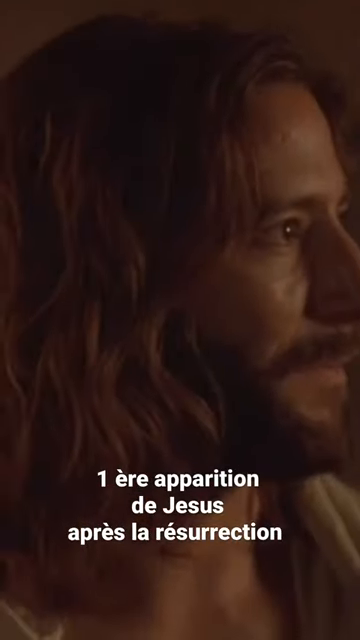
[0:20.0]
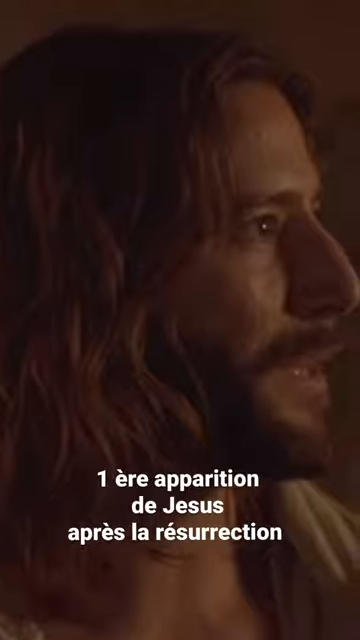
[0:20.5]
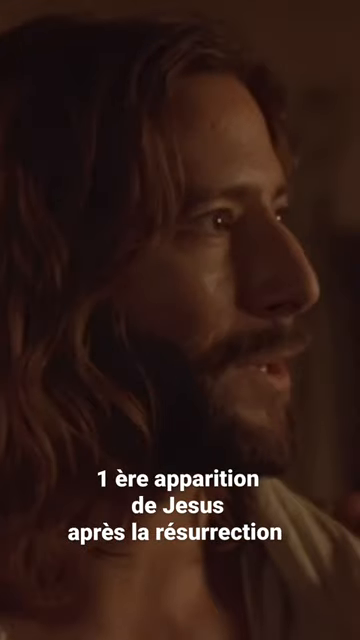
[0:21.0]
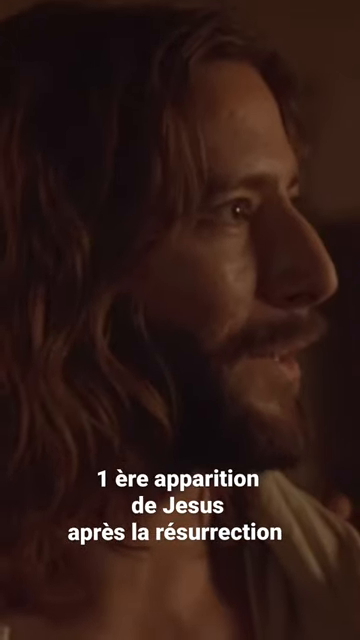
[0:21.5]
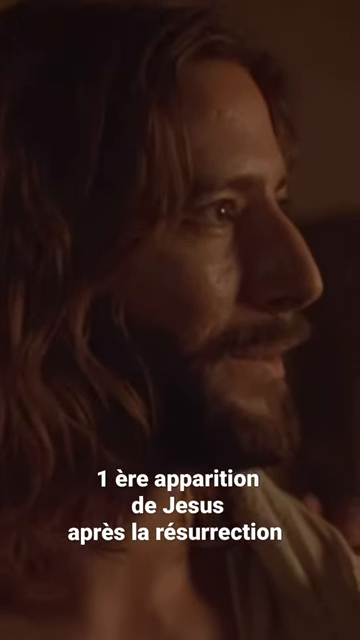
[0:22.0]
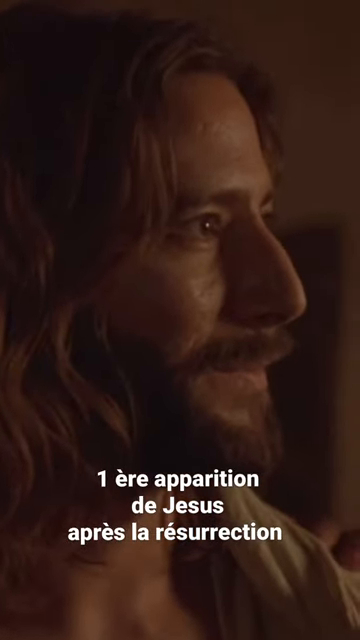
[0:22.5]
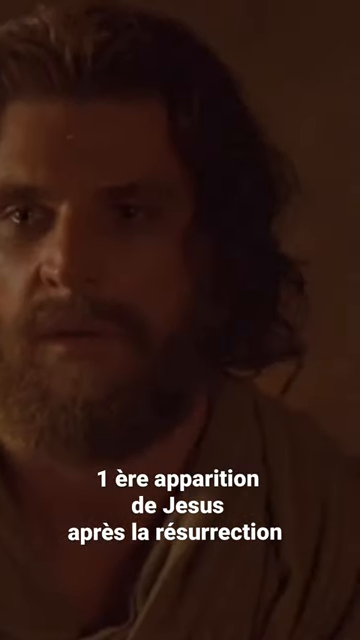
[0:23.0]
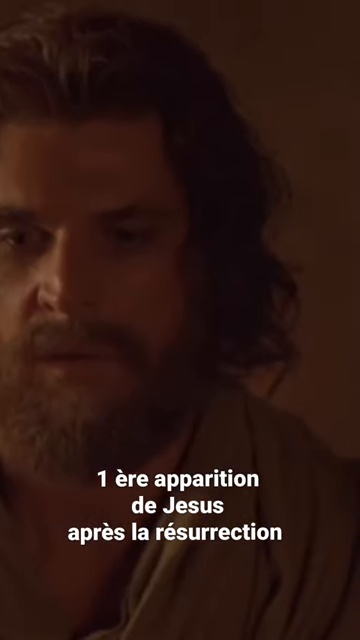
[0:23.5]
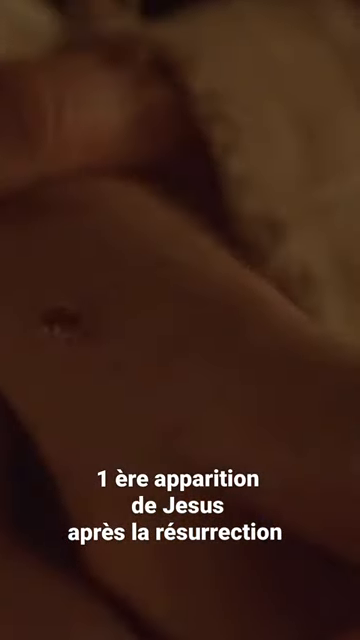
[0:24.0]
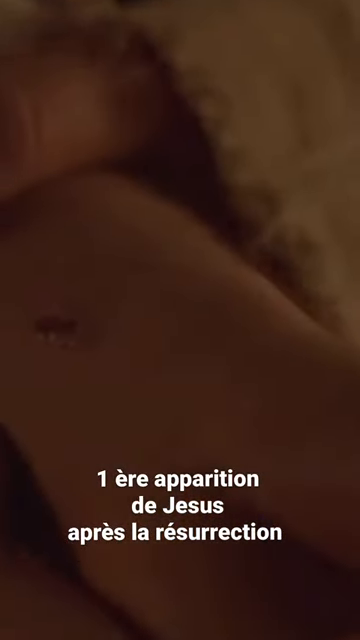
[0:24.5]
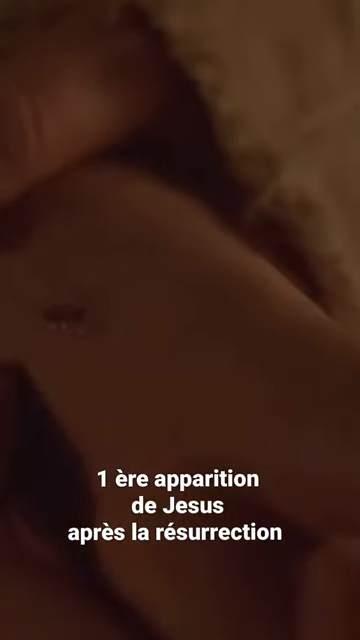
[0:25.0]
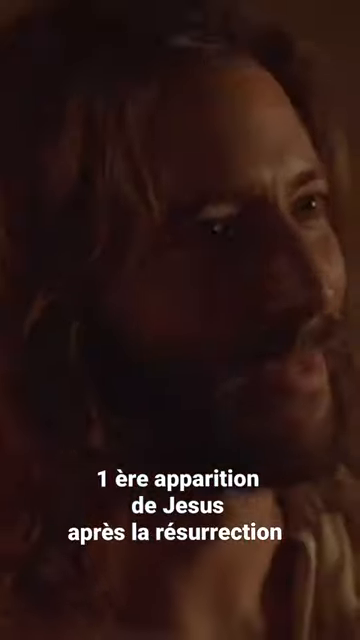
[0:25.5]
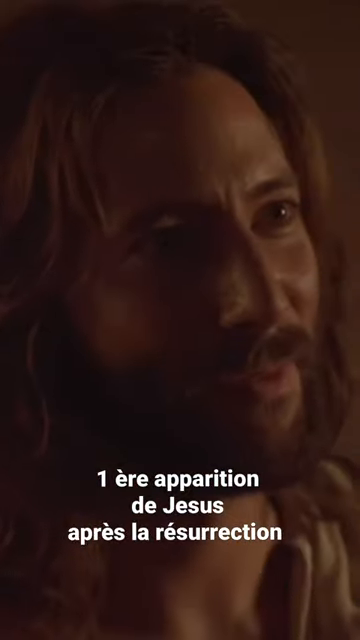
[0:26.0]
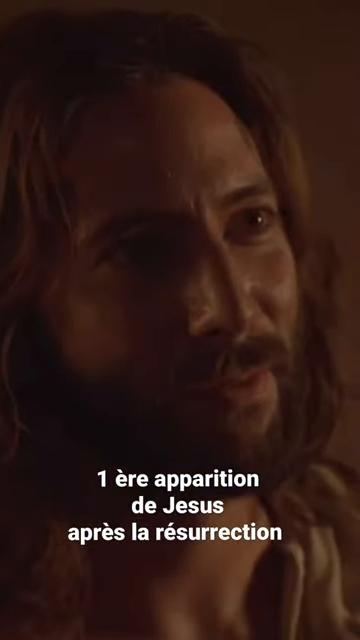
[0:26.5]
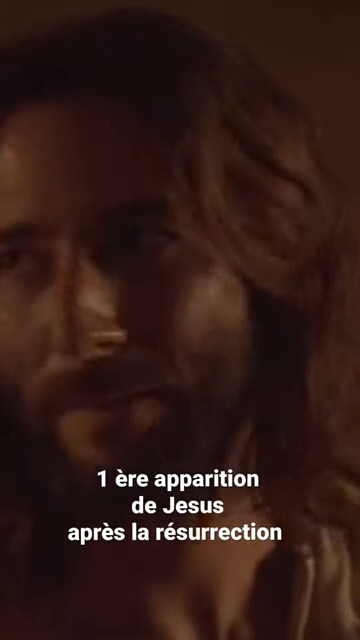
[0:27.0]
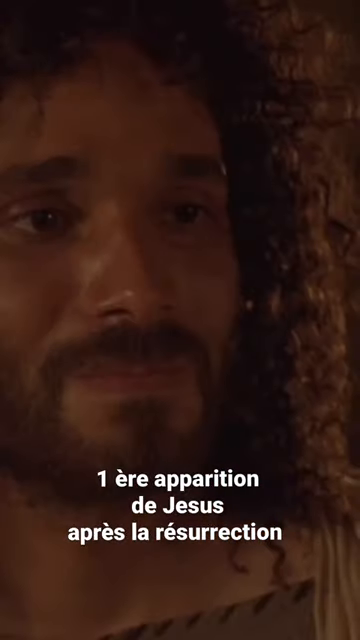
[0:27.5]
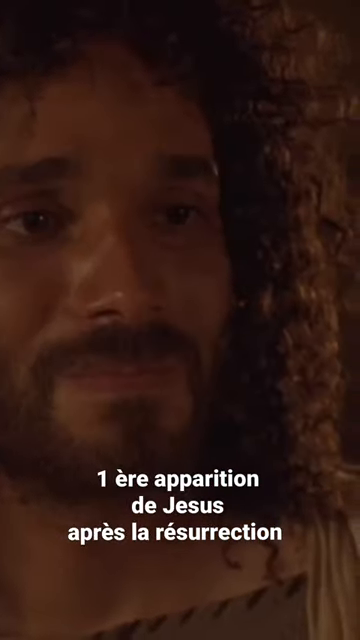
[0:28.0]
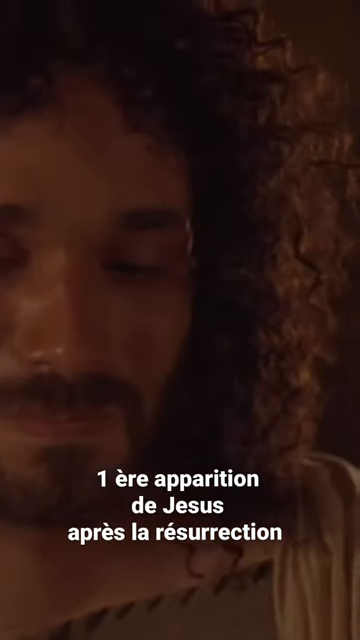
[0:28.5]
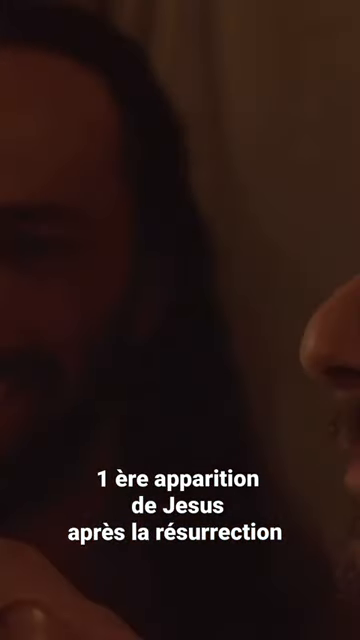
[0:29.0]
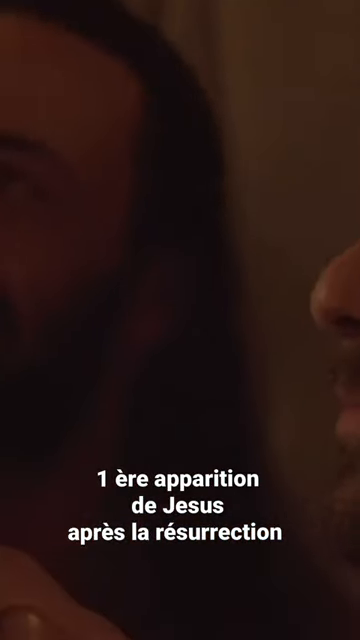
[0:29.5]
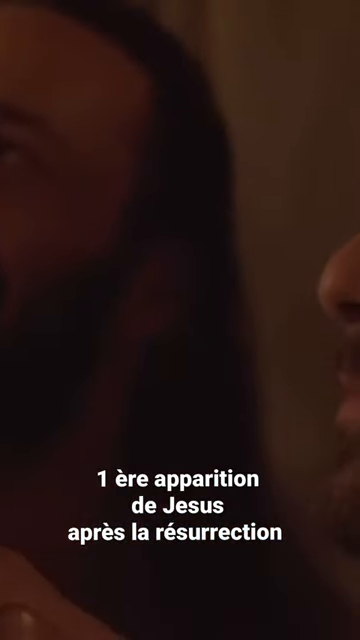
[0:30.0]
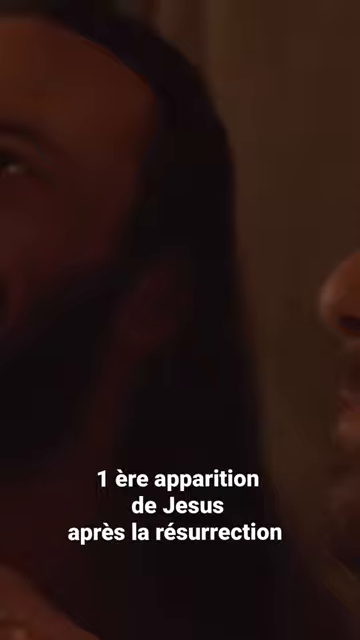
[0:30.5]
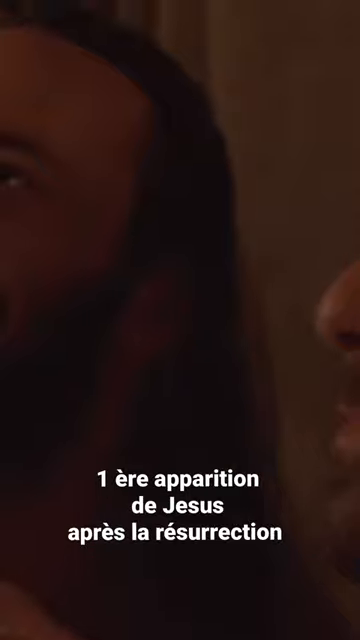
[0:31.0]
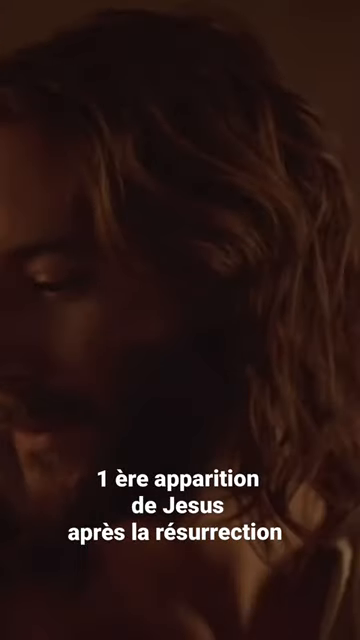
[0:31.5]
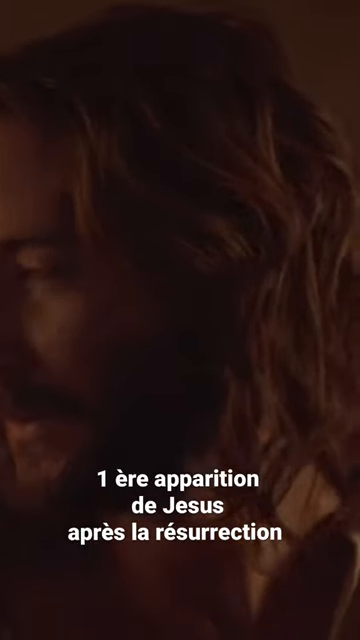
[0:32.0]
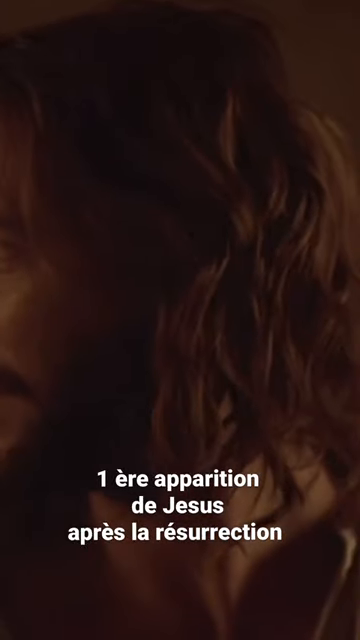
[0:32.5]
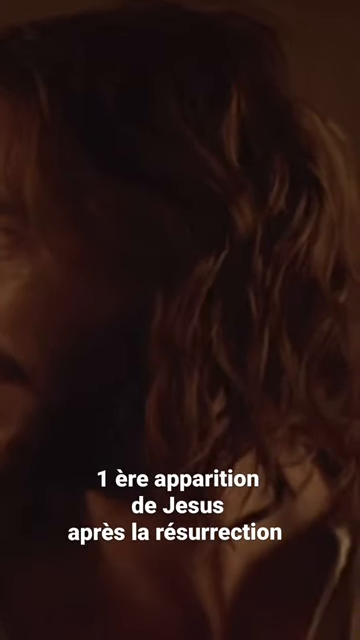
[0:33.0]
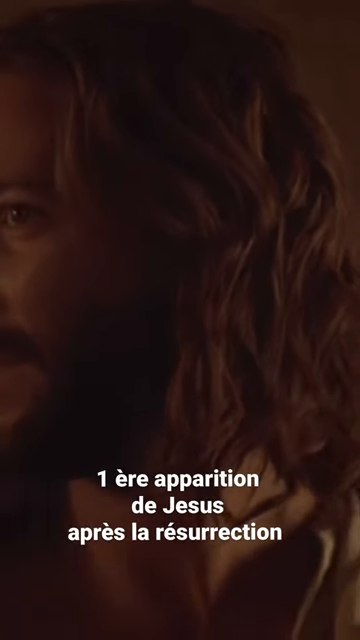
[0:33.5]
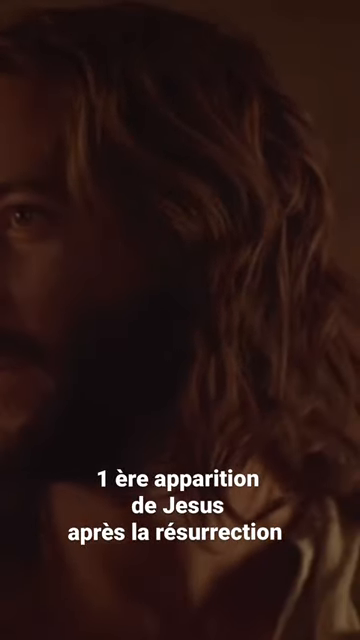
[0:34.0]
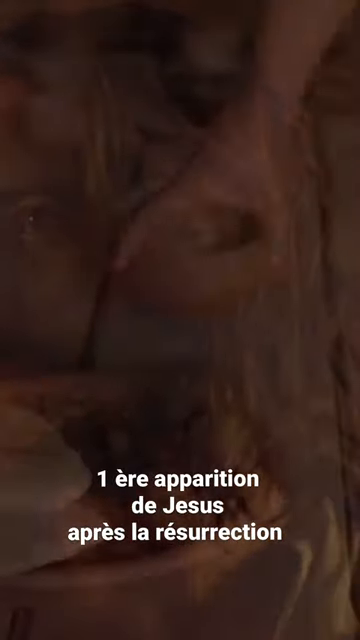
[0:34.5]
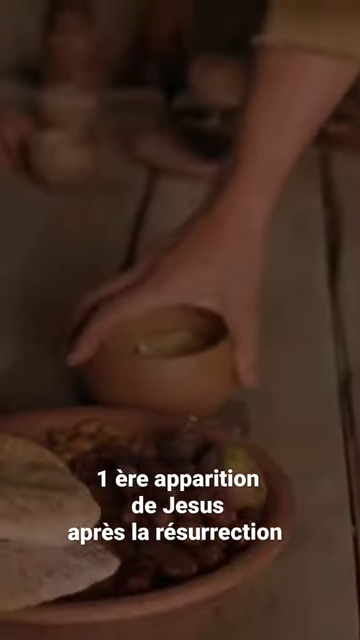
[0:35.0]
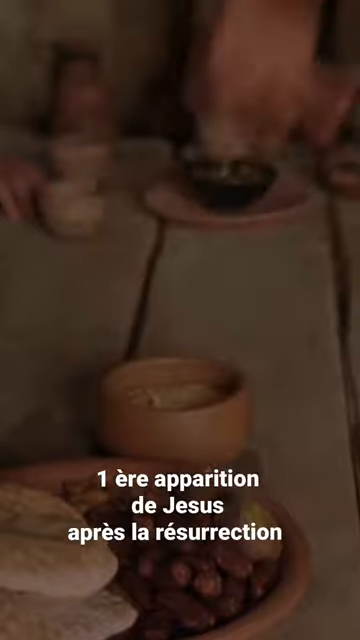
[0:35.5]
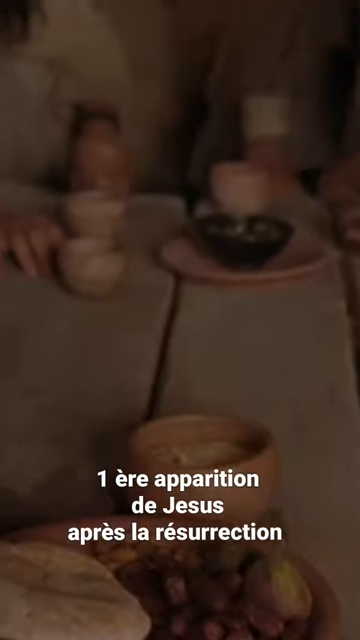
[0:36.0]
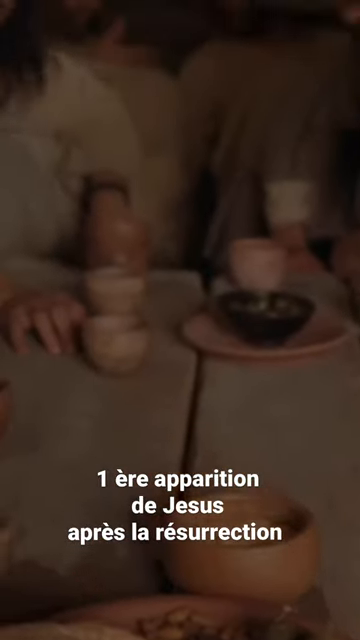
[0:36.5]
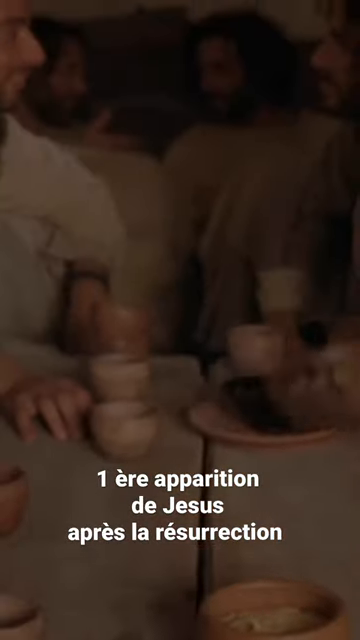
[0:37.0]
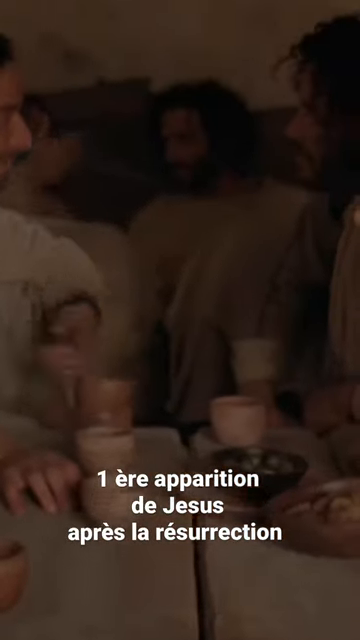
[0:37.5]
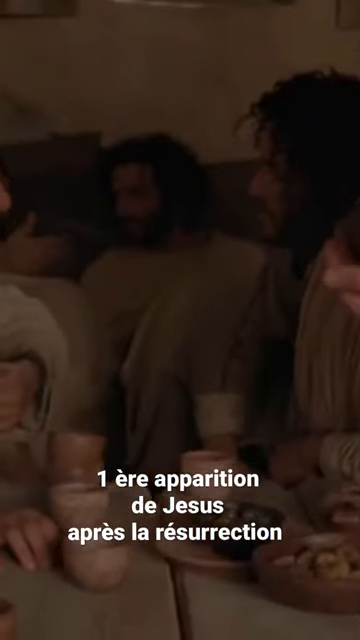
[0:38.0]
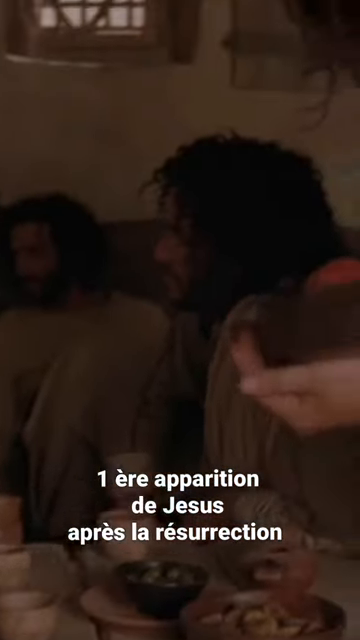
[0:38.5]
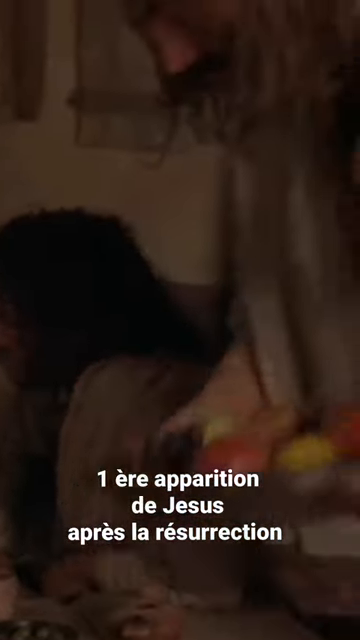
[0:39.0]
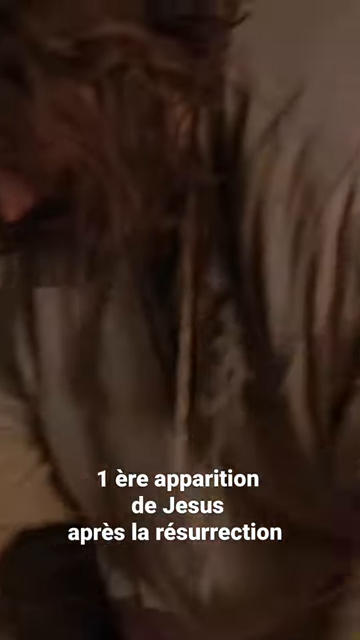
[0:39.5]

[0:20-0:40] A tight shot shows the face of the man dressed as Jesus as he begins speaking. The shot transitions to another man, who looks like he is listening intently. Jesus turns his head, and the shot moves to yet another man's face while Jesus continues talking. Wounds can be seen on his hands. He looks around, followed by shots of other men looking at him. The men look very solemn and sad. Toward the end, the video transitions to one of the men placing plates of food in wooden bowls on a table. The men seem to be sitting around the table, possibly at the Last Supper. There are many wooden bowls on the table, along with some bowl-shaped cups, smaller than the bowls, also made of wood.